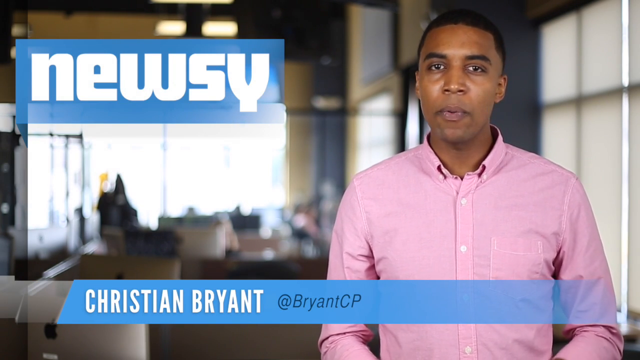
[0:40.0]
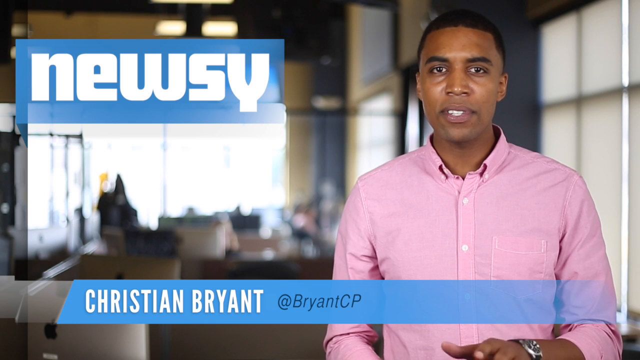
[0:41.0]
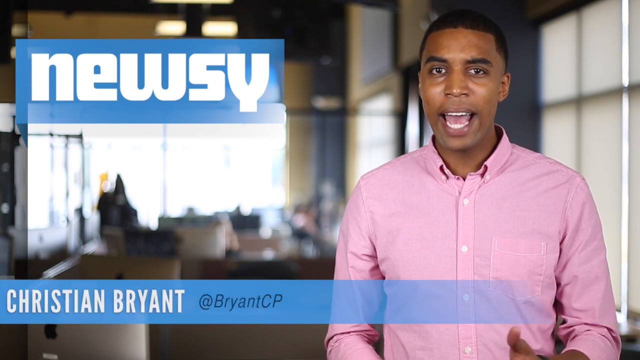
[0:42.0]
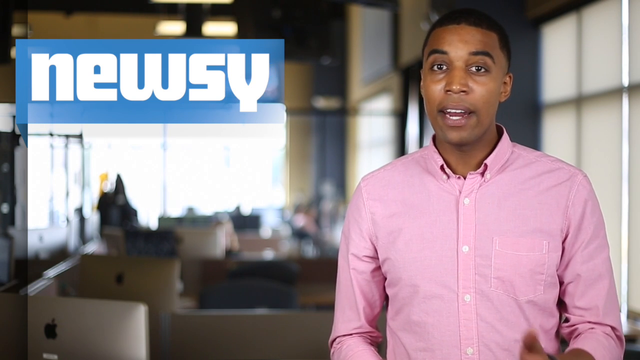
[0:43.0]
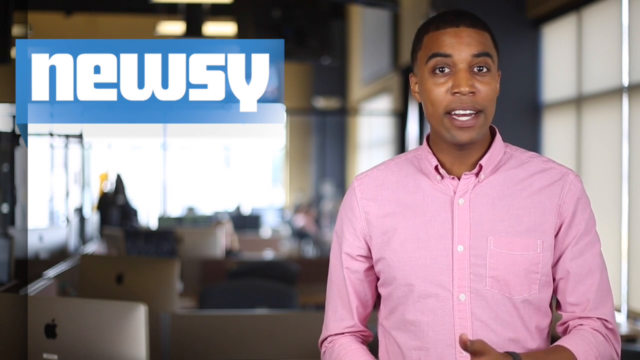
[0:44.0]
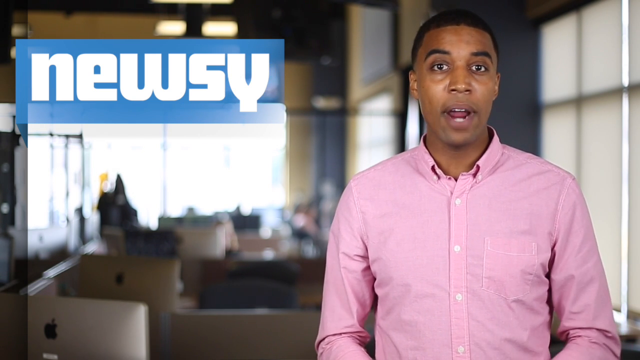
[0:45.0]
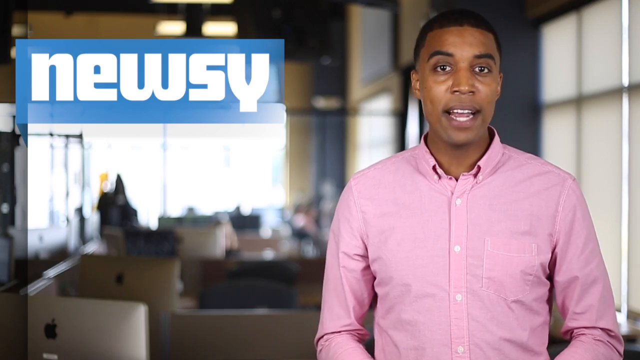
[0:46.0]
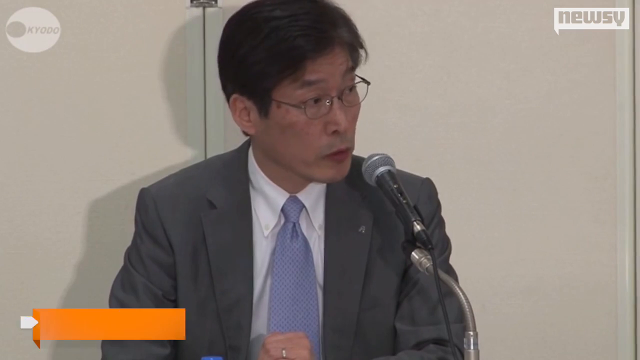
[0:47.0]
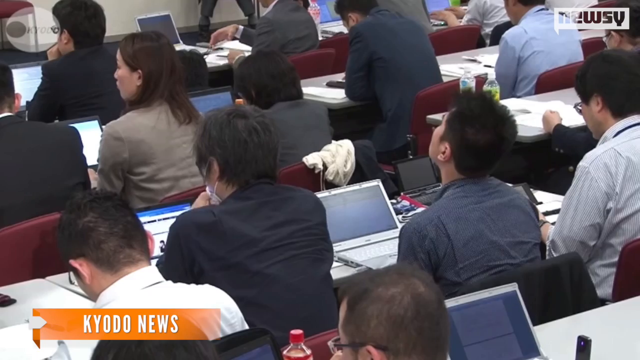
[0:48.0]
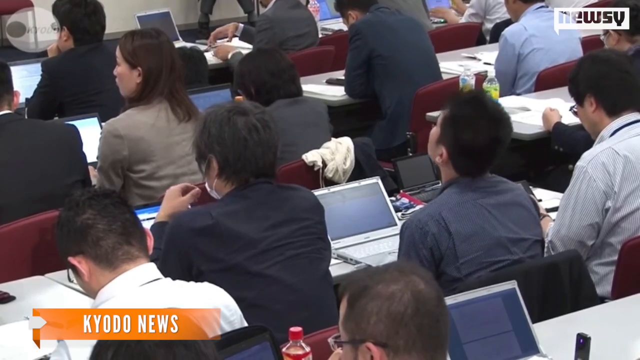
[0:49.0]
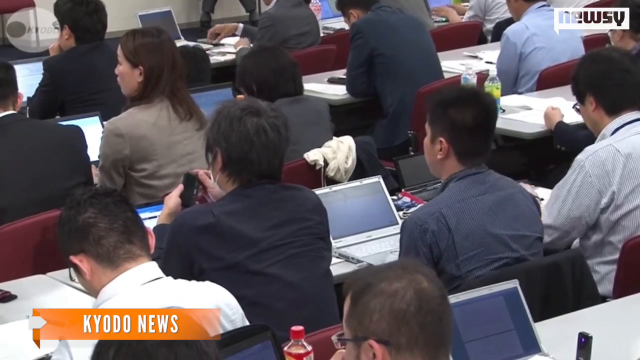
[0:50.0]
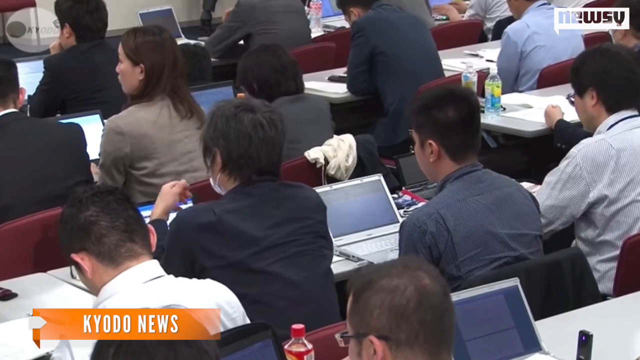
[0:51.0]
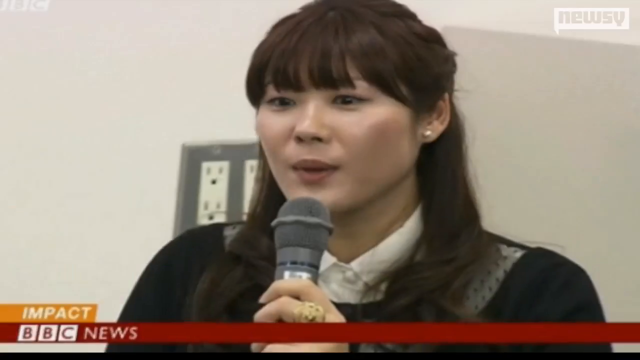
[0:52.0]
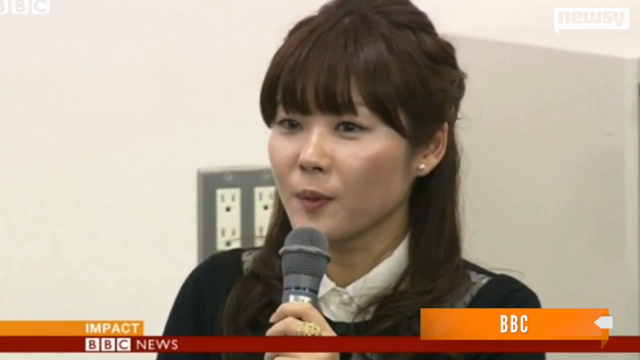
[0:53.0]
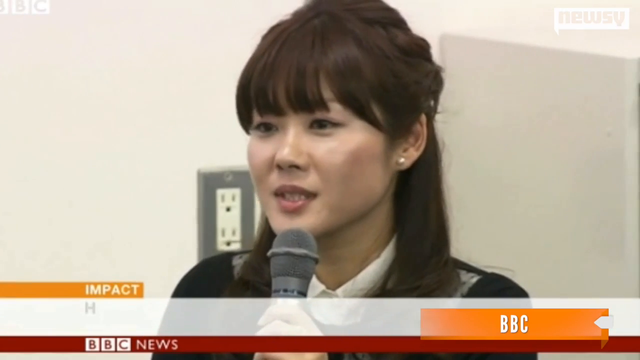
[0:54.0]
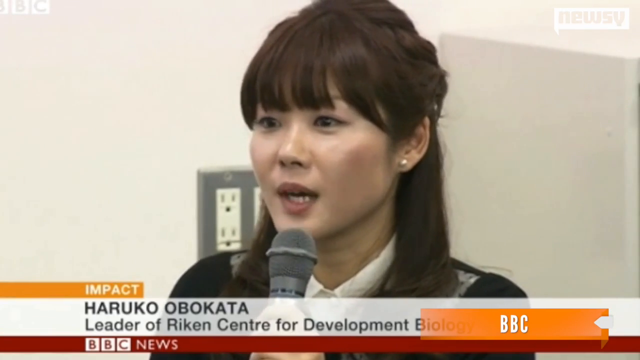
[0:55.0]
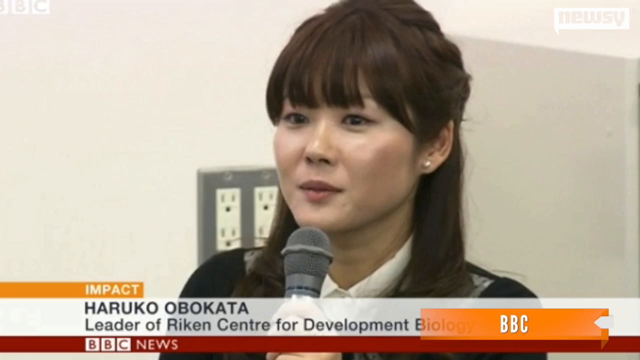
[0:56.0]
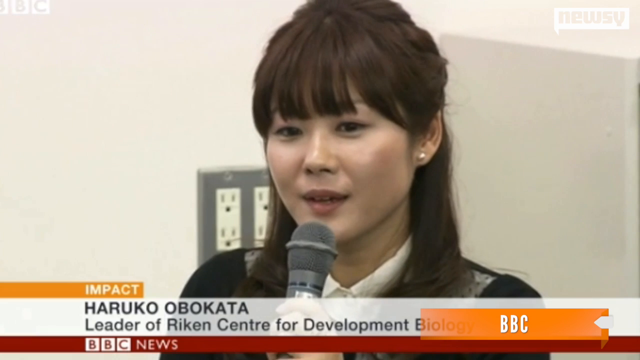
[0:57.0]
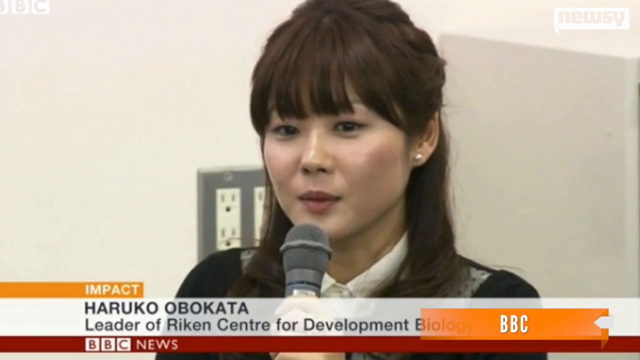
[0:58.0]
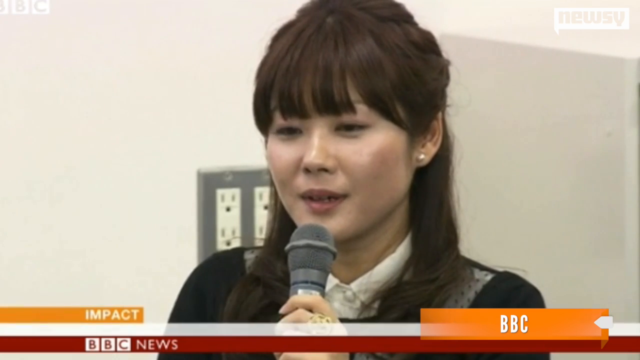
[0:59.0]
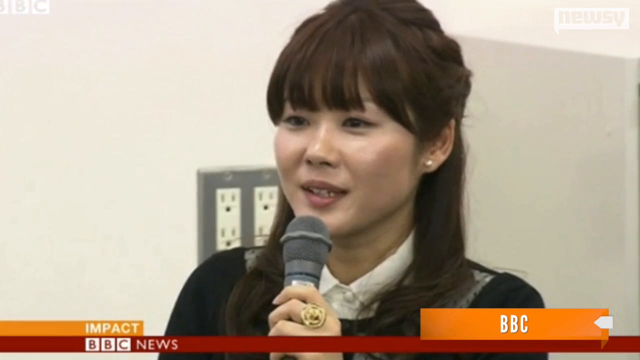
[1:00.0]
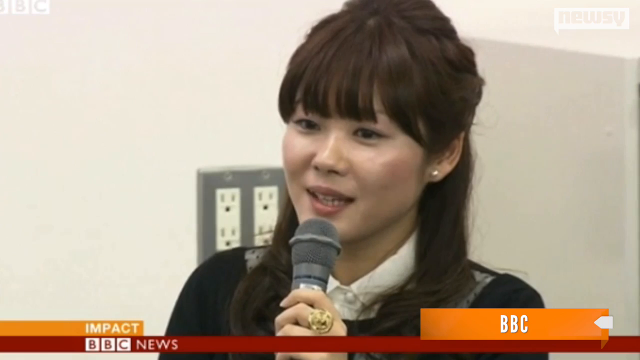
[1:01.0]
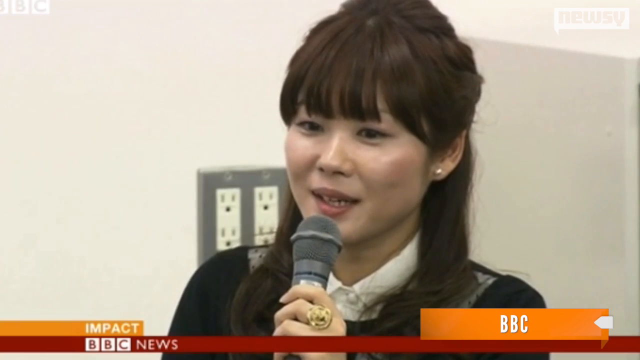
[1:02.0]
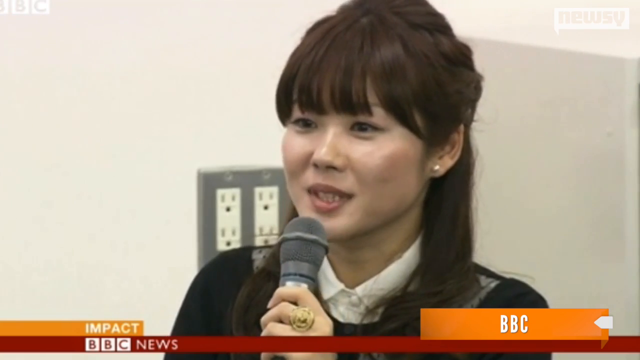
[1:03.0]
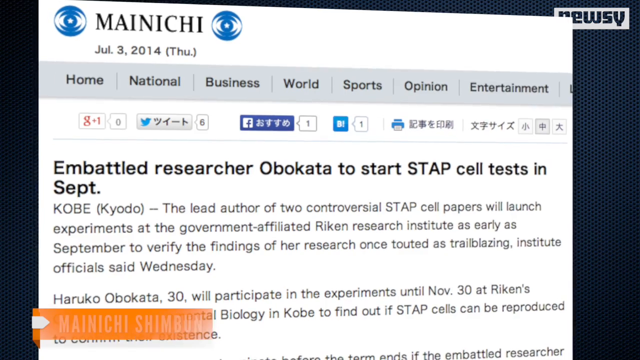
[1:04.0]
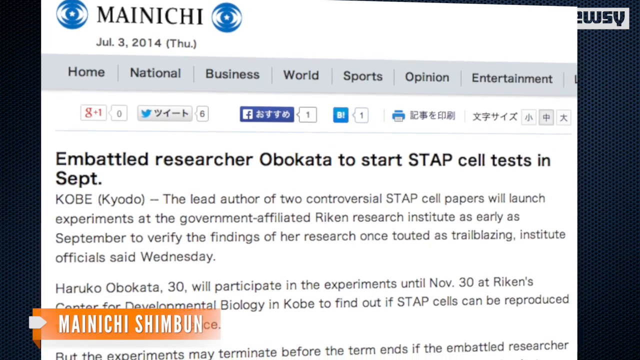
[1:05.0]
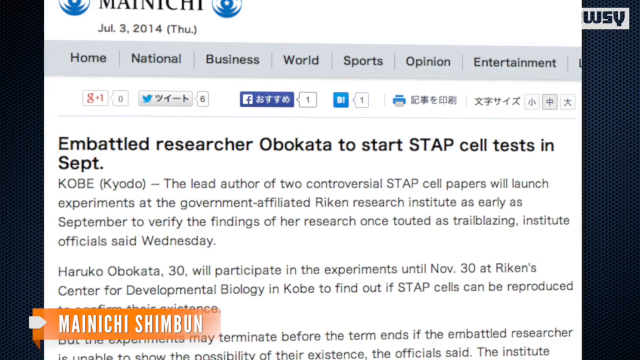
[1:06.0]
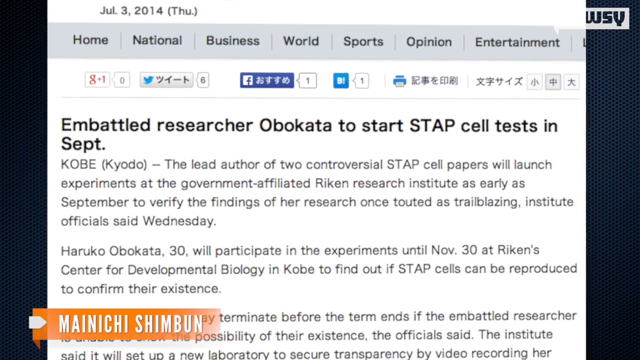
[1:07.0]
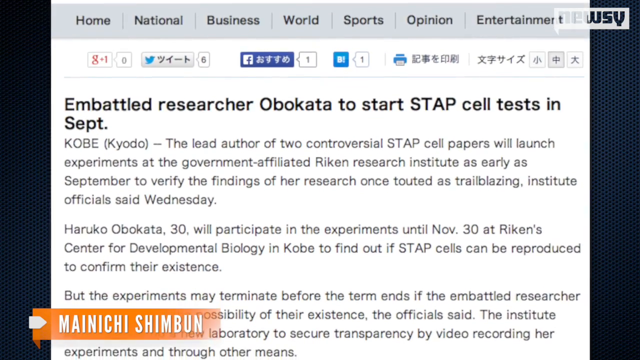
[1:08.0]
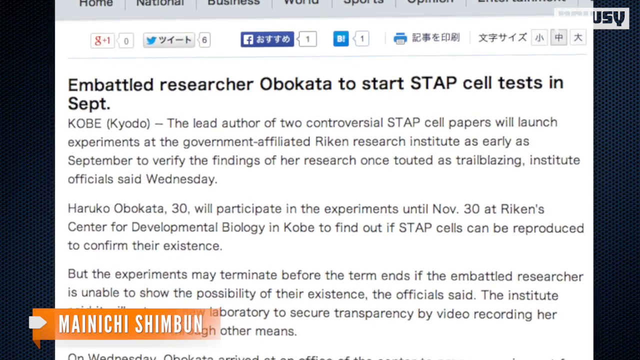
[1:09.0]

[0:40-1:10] Christian Bryant, an African American news reporter in a pink shirt, appears with "Newsy" on screen. He is apparently in some type of office and talks a lot with his hands. Next, an unidentified man at a podium addresses an audience, with the text "kyudo news." Then an Asian woman, Obokata, talks on screen, labeled as leader of Riken's Center for Development Biology, with "BBC News" shown. The Newsy segment appears to be drawing footage from other news segments. An article then appears reading "Embedded researcher Obokata to start STAP cell test in September."